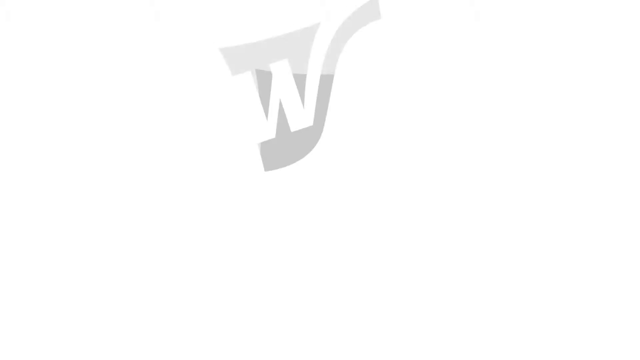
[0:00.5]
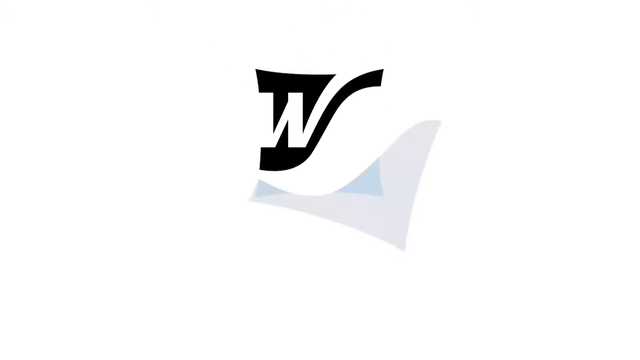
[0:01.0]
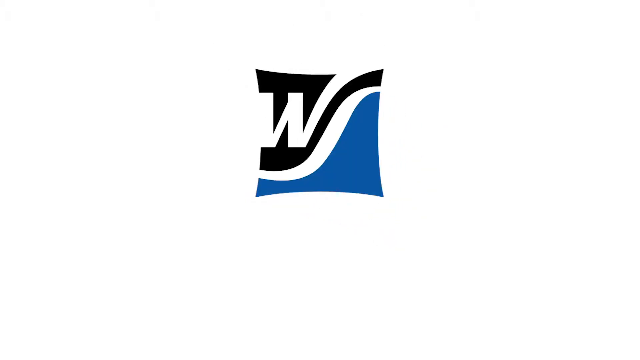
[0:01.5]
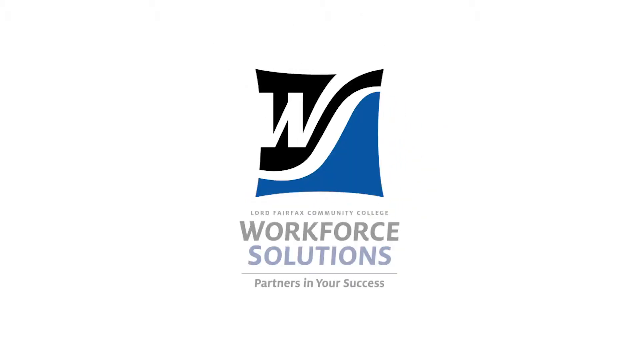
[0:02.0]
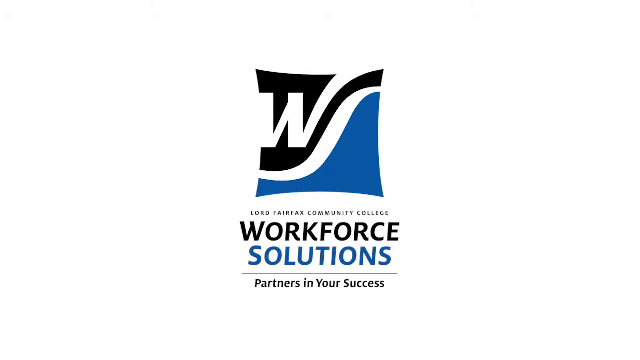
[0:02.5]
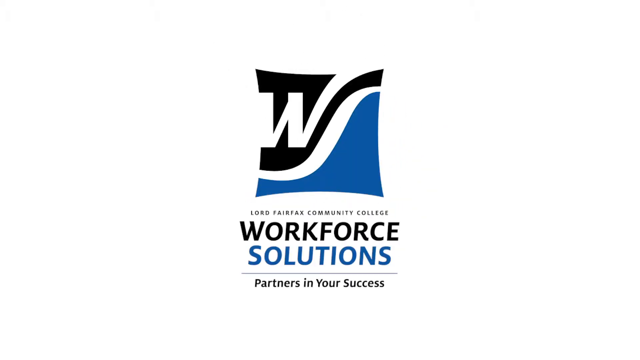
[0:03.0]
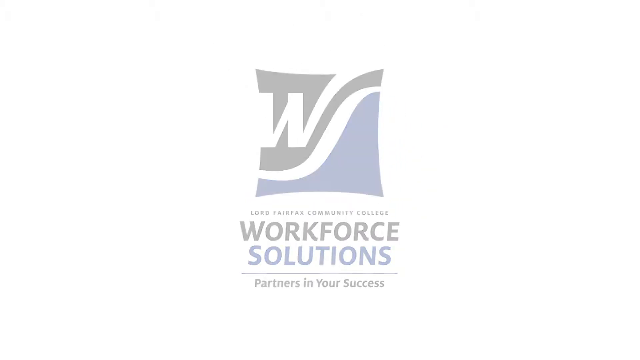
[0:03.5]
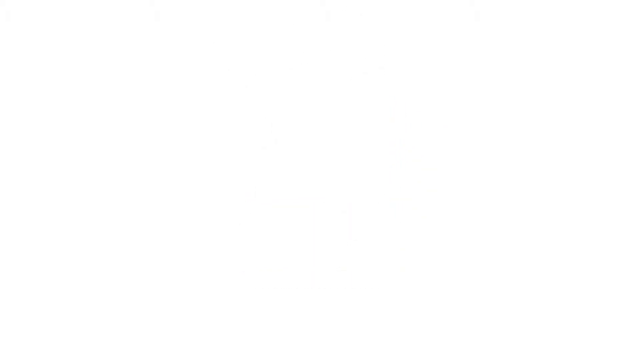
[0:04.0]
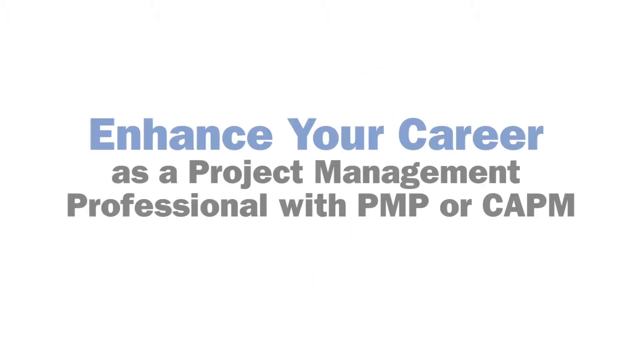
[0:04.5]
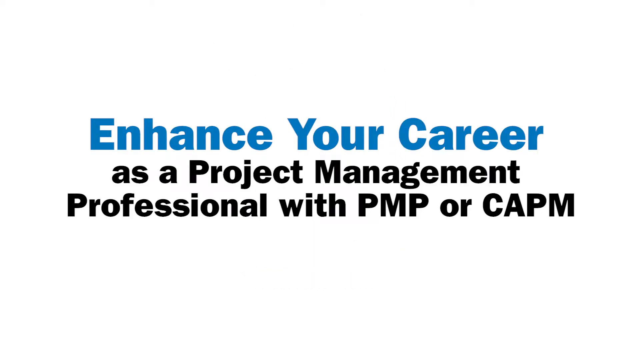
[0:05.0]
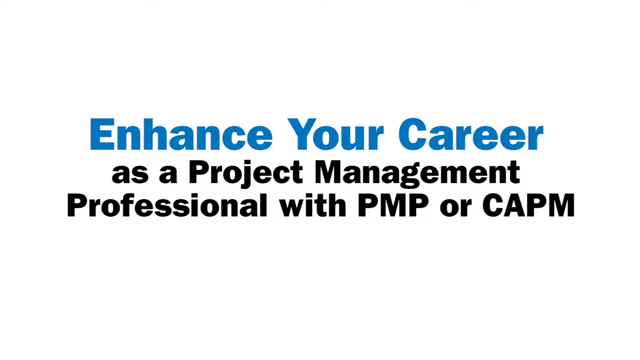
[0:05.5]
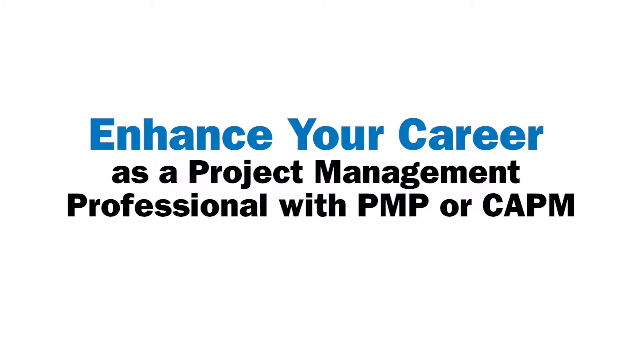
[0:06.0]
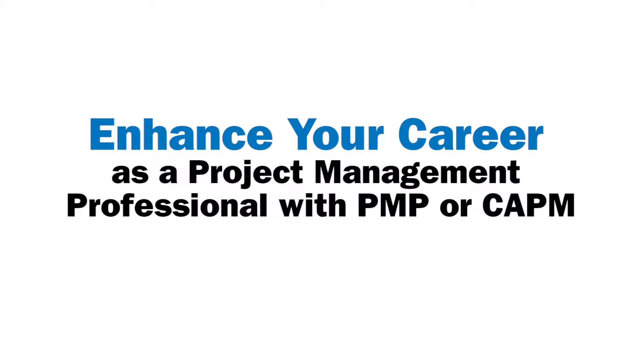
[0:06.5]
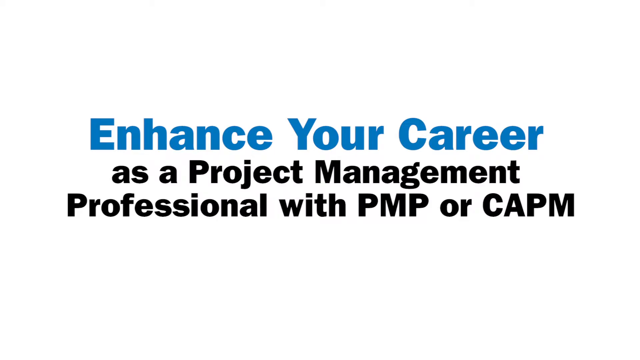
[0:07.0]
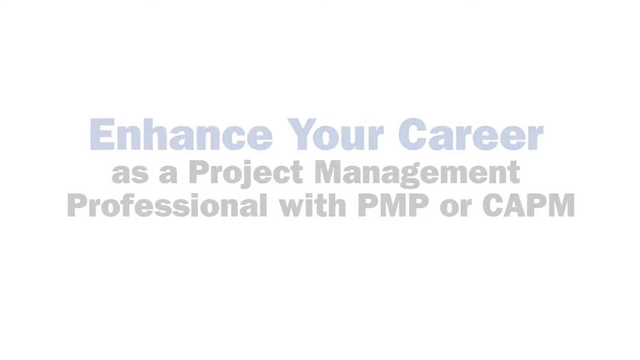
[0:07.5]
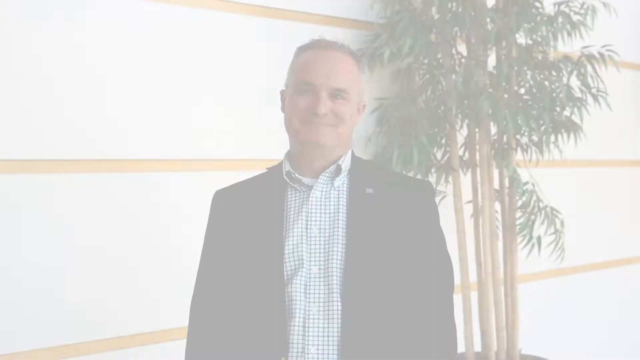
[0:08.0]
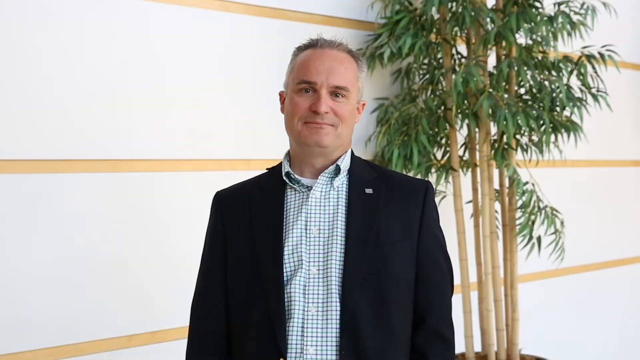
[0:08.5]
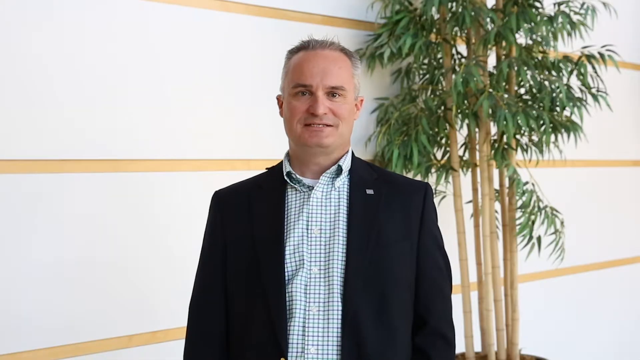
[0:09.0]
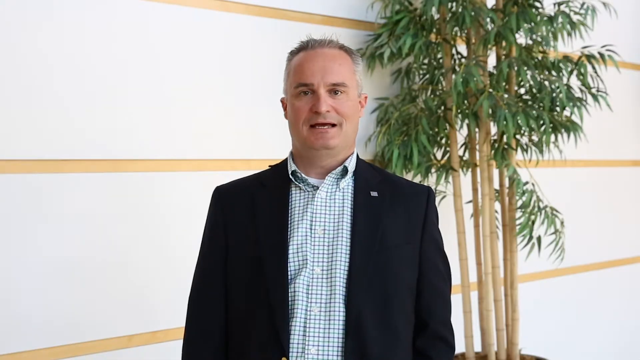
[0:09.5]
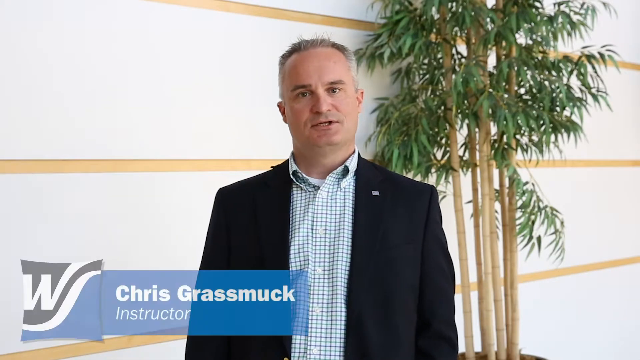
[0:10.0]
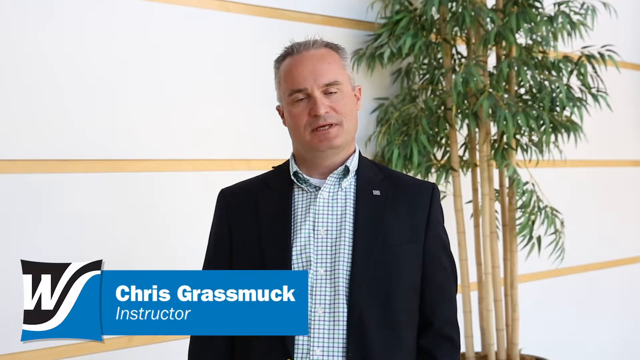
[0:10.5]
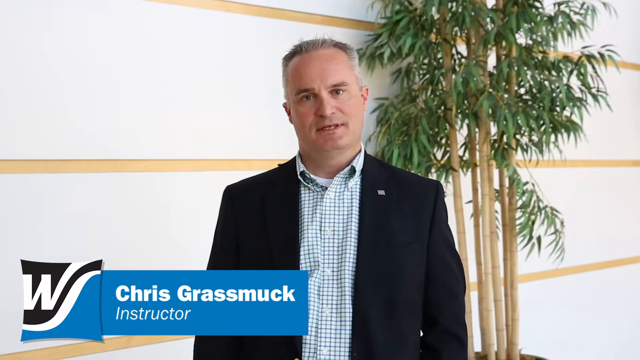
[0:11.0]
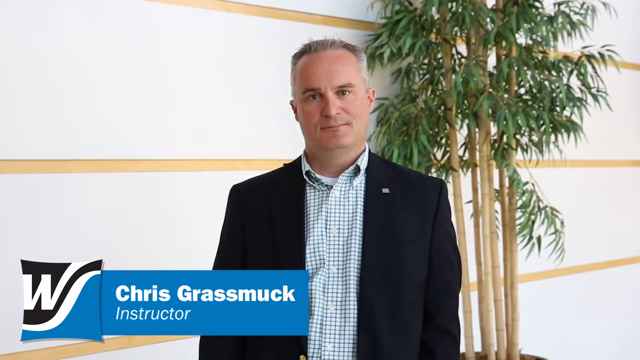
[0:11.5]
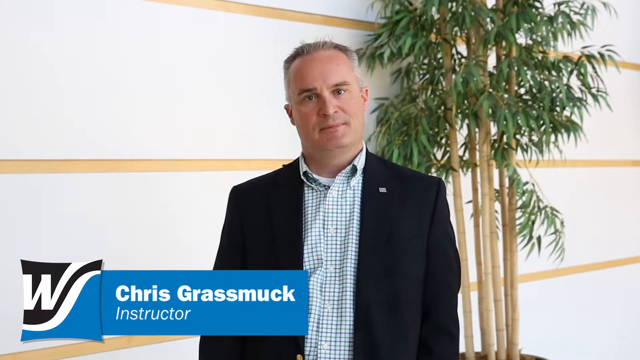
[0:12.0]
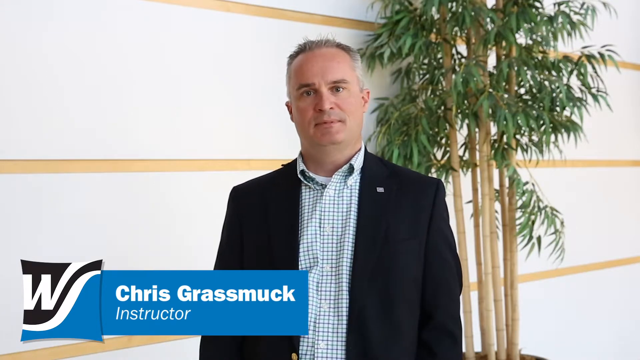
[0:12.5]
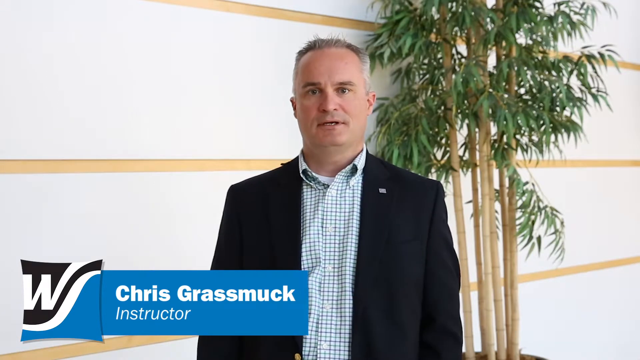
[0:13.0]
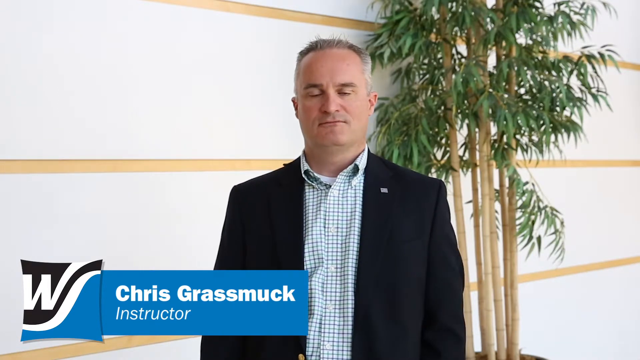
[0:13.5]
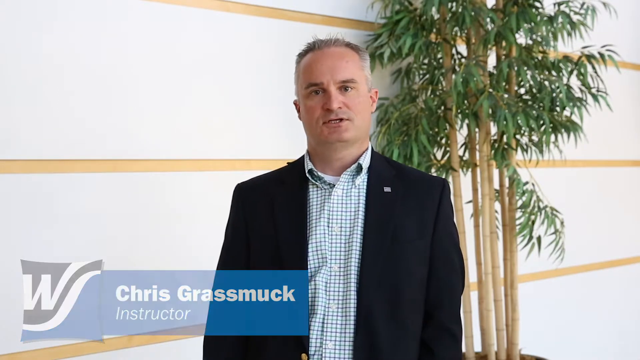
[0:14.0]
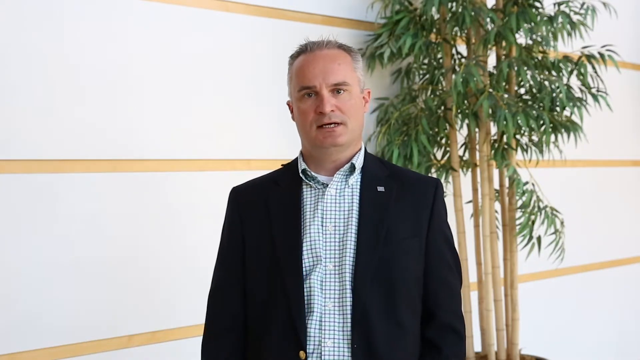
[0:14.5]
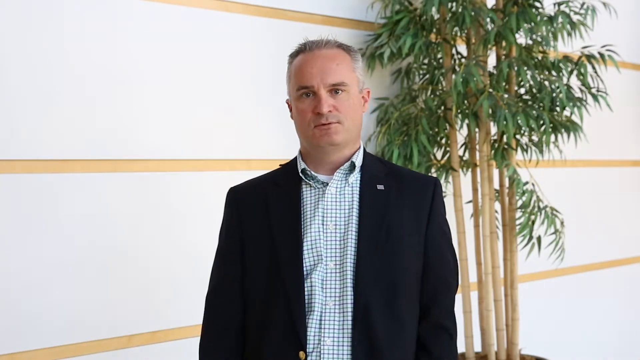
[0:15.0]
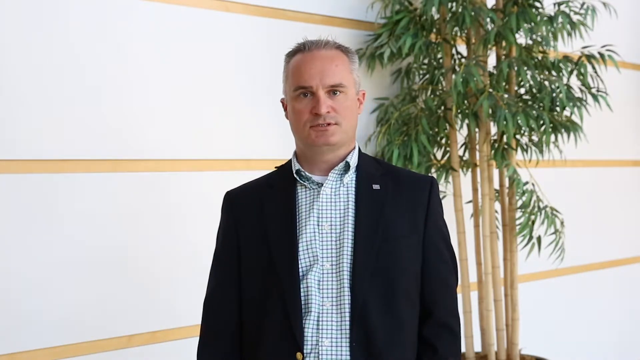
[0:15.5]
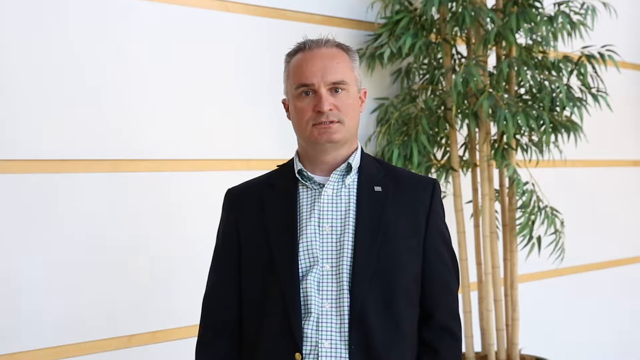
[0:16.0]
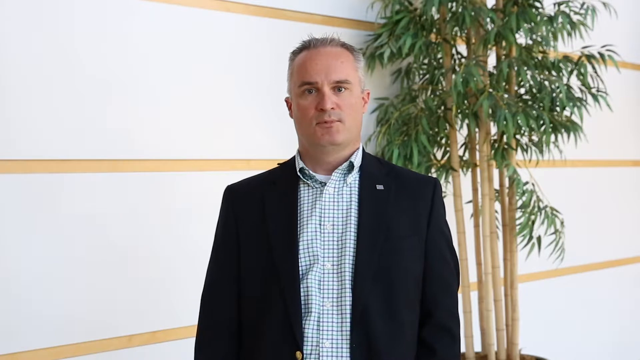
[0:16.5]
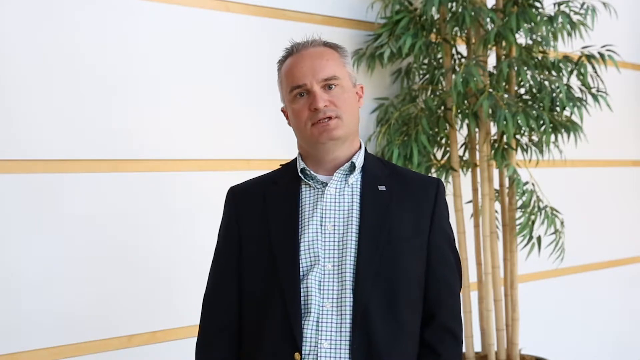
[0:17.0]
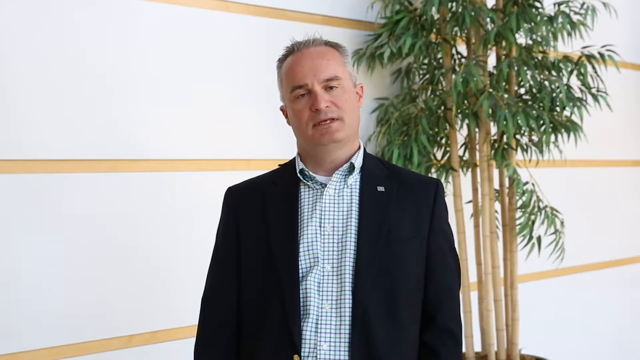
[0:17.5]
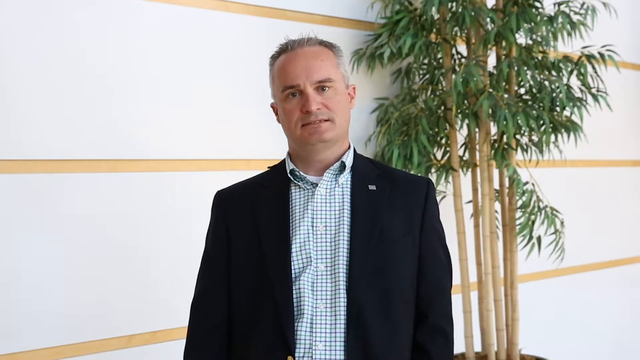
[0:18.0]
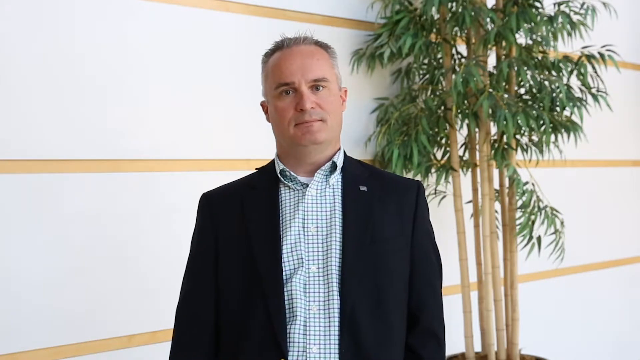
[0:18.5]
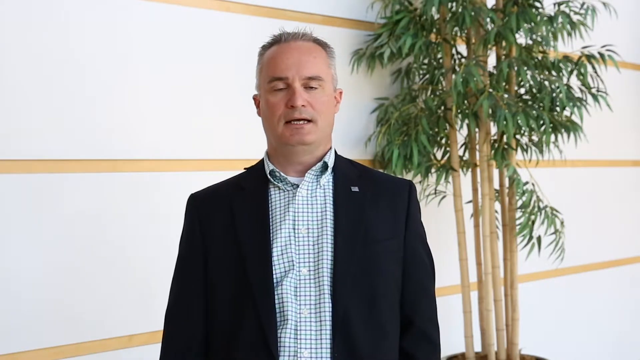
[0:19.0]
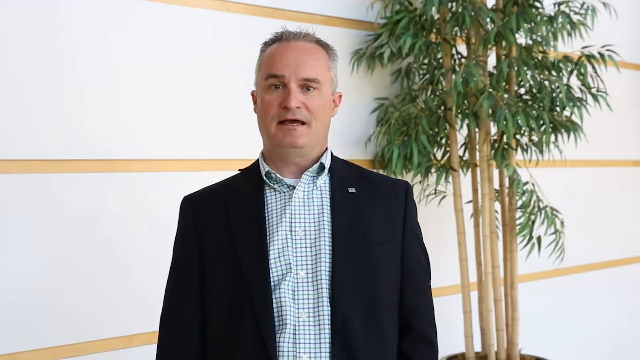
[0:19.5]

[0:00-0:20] The screen starts out empty, then a W logo in blackish tones with a blue background appears, along with the words "workforce solution", "workforce" in black and "solution" in blue. Smaller text reads "Lord Fairfax Community College", and a line below reads "Partners in Success". After the logo disappears, the text "enhance your career" appears in a medium font, followed by "as a project management professional with PMP or CAPM" in a dark black font. The words then disappear, and a man appears wearing a black jacket over a green and white striped t-shirt, with short hair. He is Chris Grassmark, an instructor at the college. He talks while moving his hand and his head.